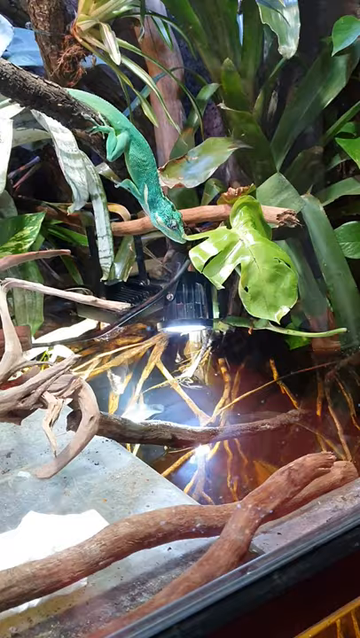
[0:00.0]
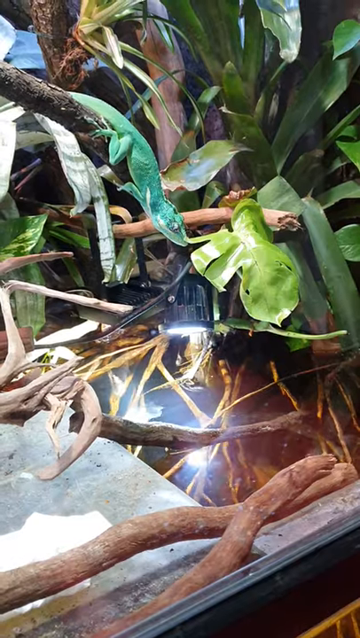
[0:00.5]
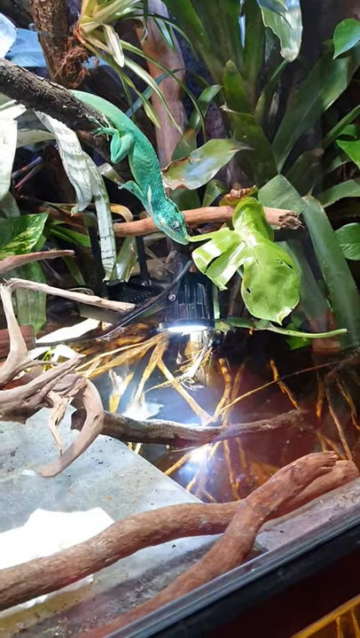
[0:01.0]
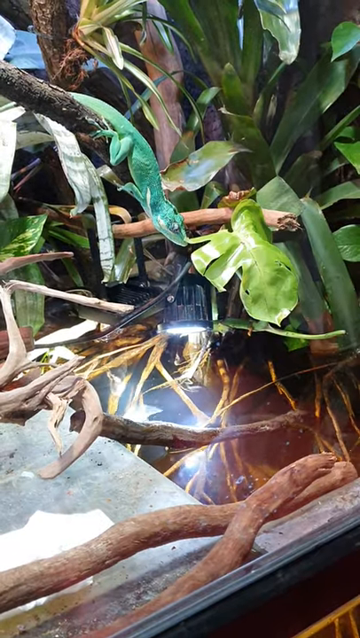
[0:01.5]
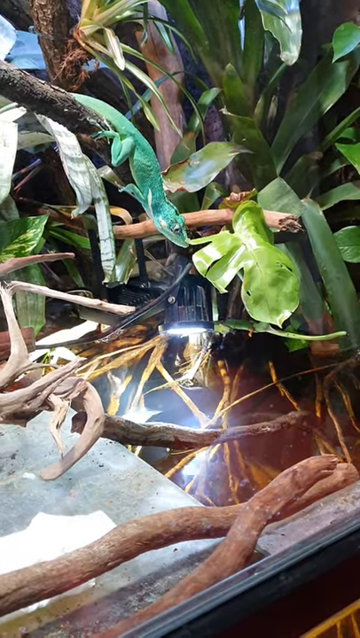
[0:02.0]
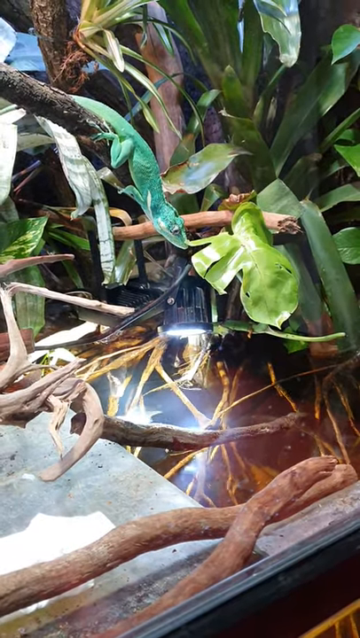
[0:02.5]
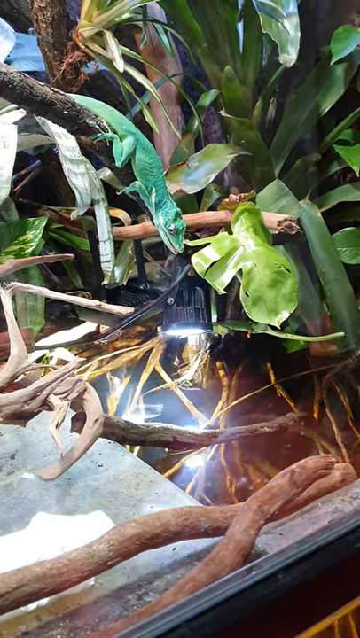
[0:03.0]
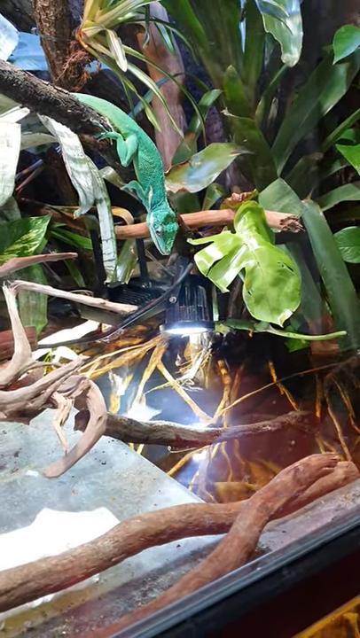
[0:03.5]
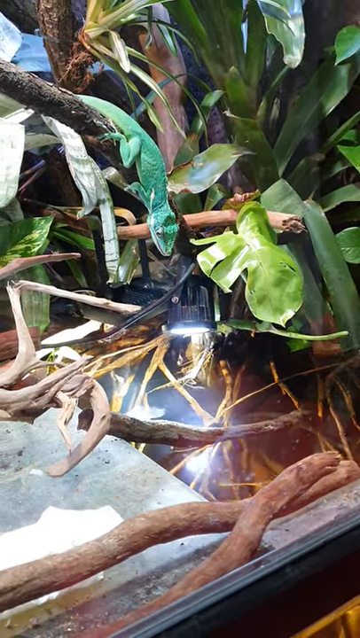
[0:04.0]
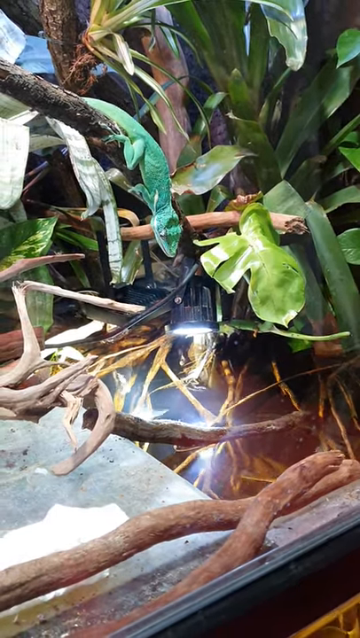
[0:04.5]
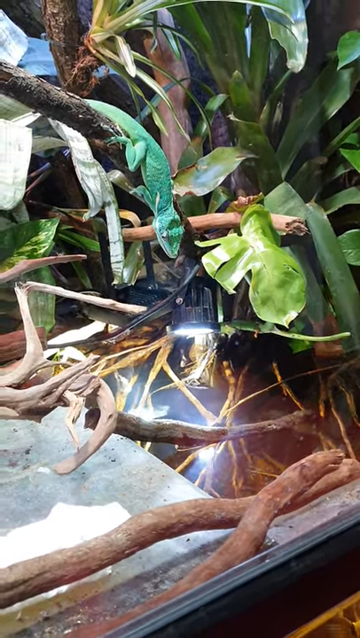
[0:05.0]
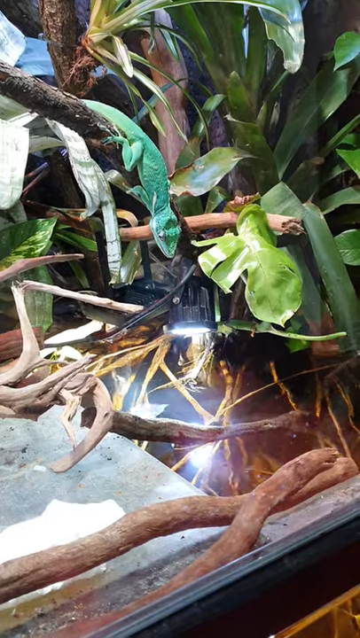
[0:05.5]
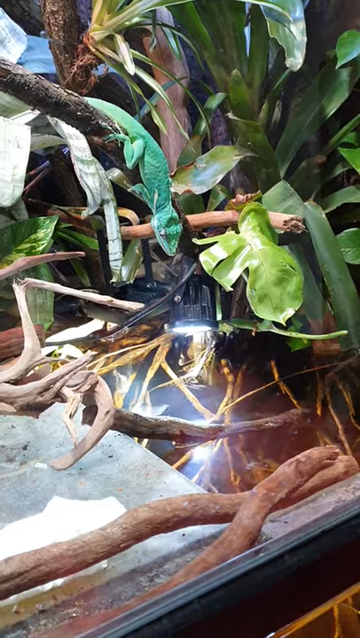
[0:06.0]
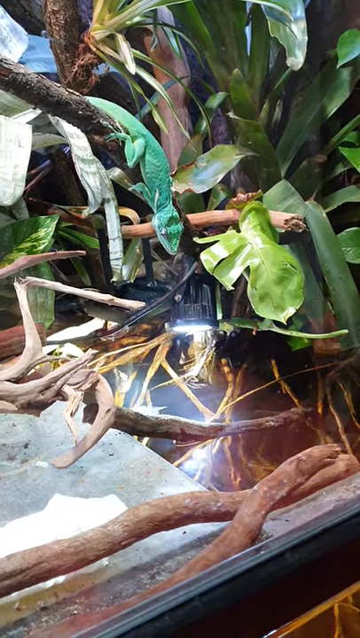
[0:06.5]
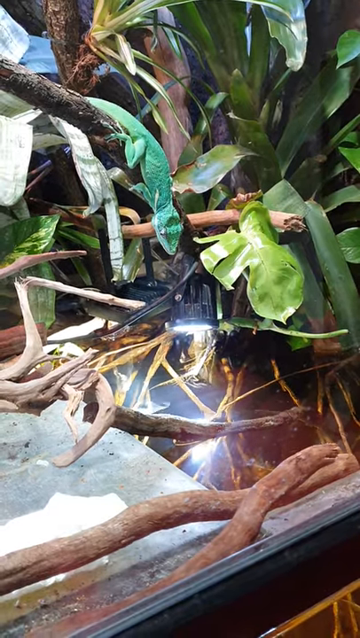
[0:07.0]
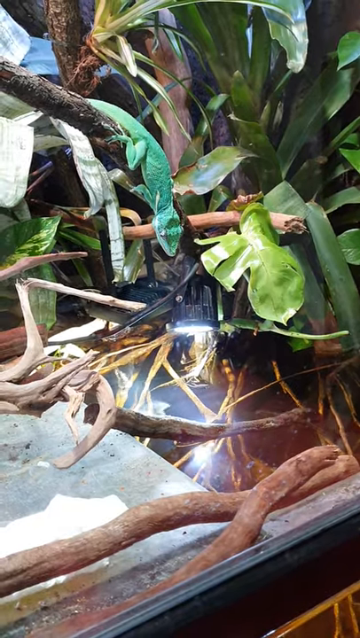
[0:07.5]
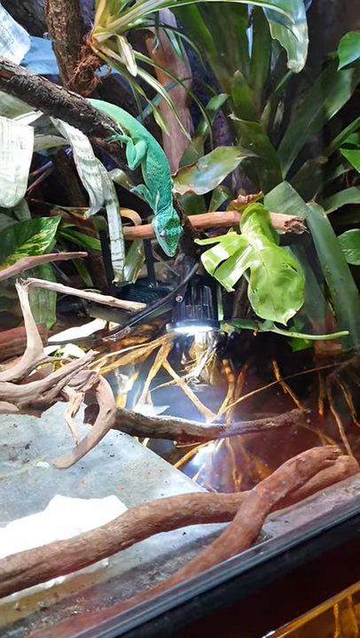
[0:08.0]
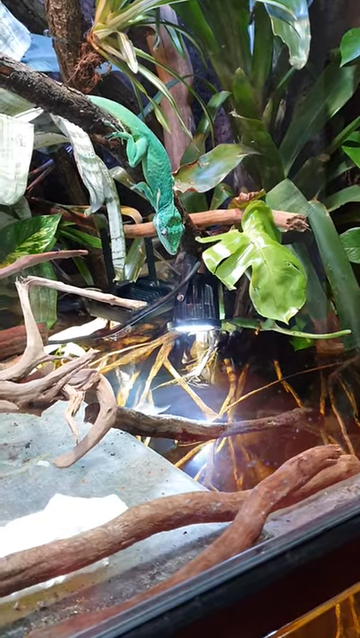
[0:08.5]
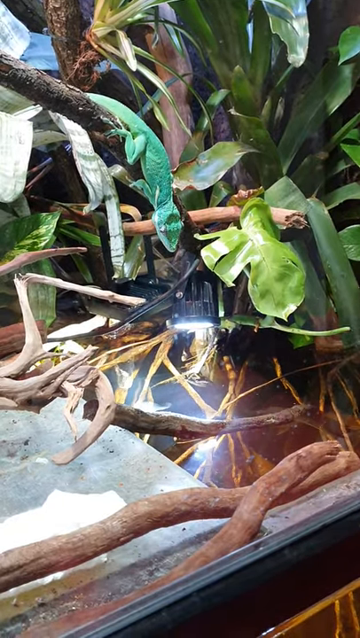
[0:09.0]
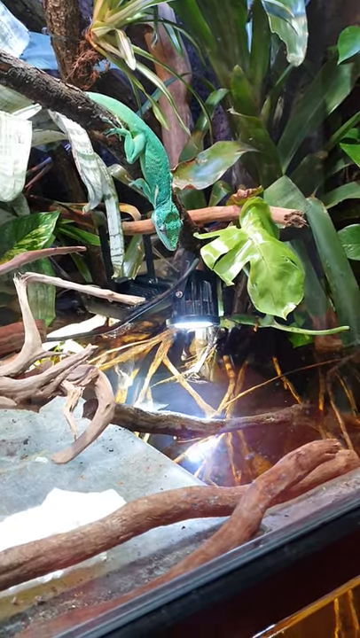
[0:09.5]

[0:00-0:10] In a landscape shot inside an enclosure, a very bright green amphibian, possibly a lizard or a gecko, sits atop a small branch, facing downwards towards a pool of water in the bottom of the frame. Lots of green plants surround it, and under the water there look to be some roots from trees and plants and some branches. The lizard is a really bright turquoise-green colour, and there are no other subjects. A small light just below the lizard's head shines down on the water, creating some reflective glare. The lizard doesn't move, and there is very little change.